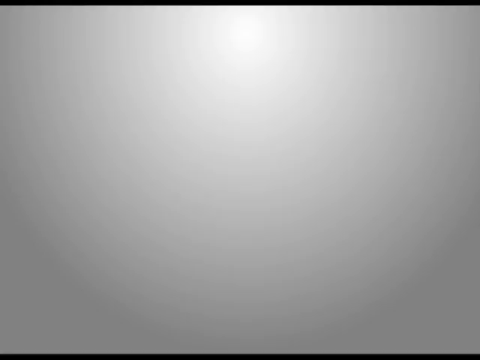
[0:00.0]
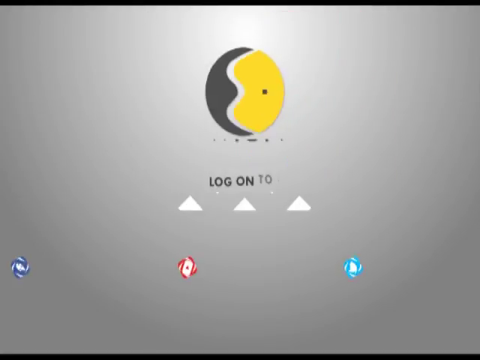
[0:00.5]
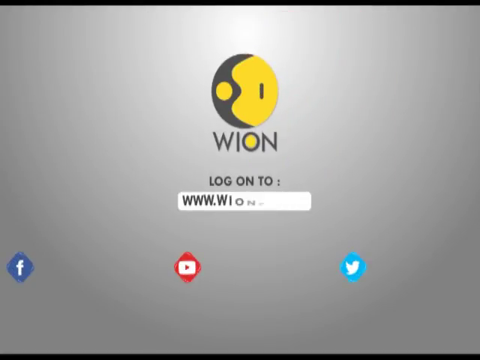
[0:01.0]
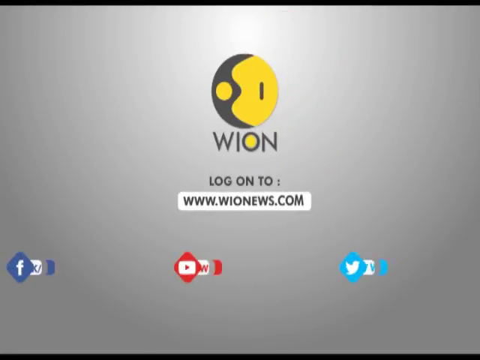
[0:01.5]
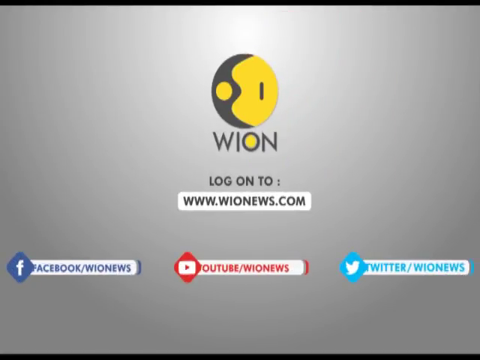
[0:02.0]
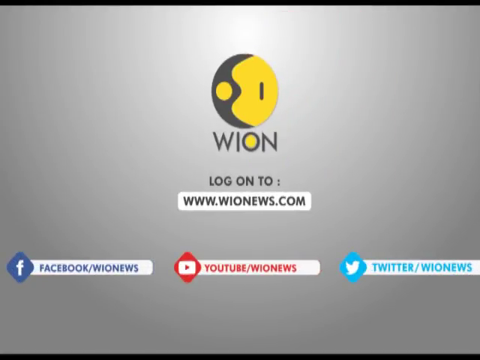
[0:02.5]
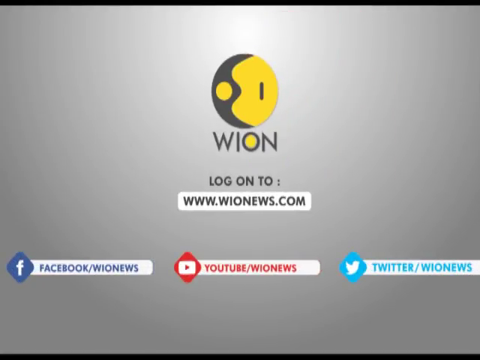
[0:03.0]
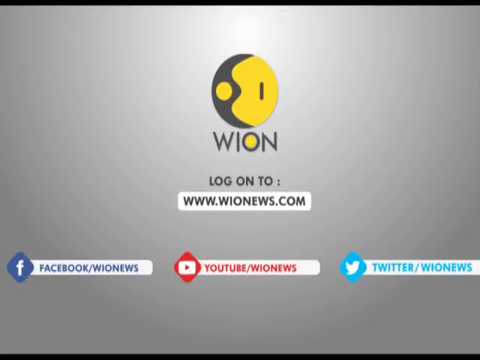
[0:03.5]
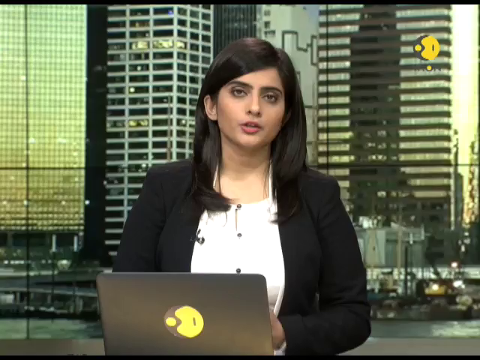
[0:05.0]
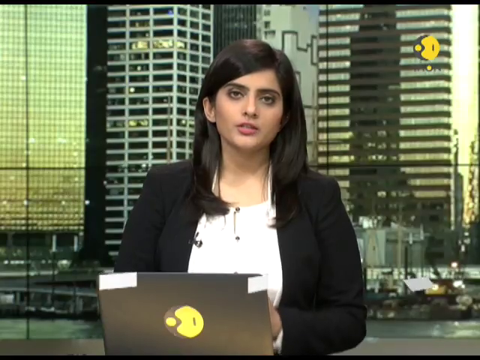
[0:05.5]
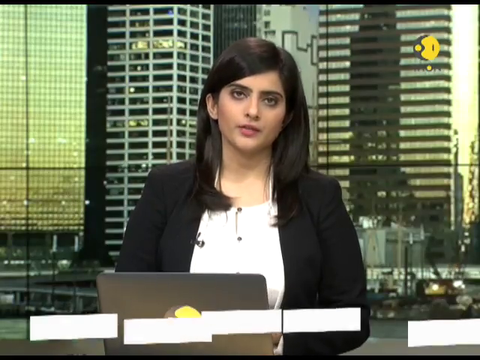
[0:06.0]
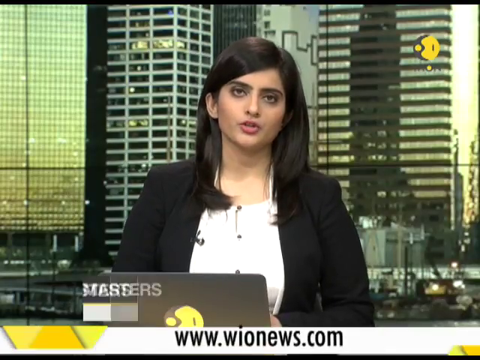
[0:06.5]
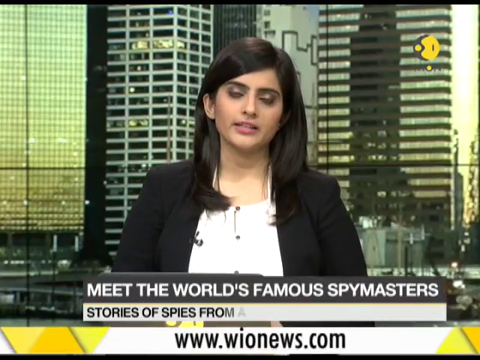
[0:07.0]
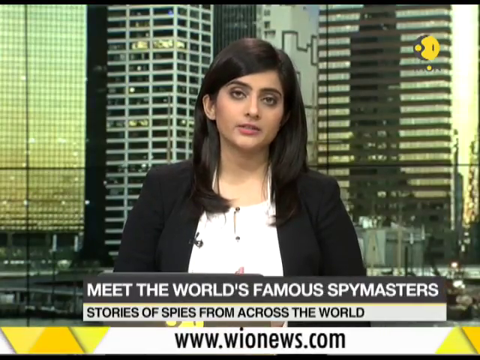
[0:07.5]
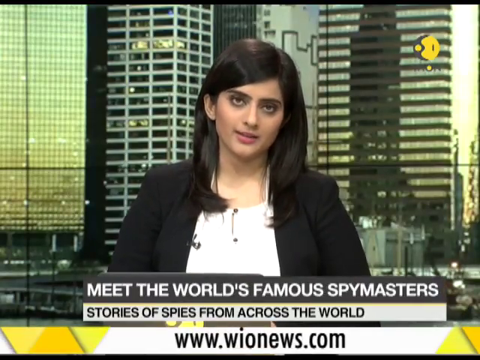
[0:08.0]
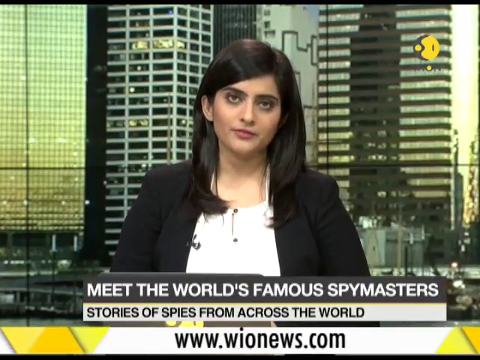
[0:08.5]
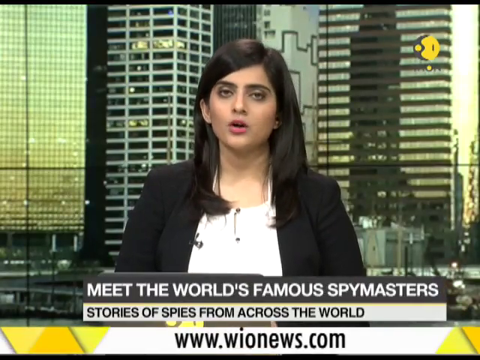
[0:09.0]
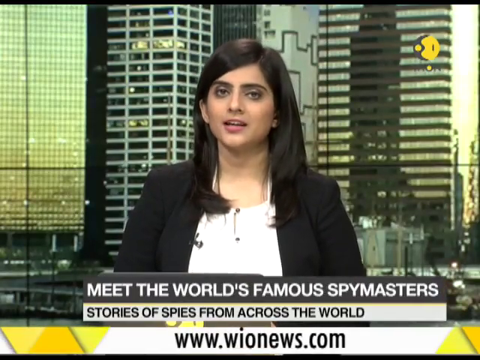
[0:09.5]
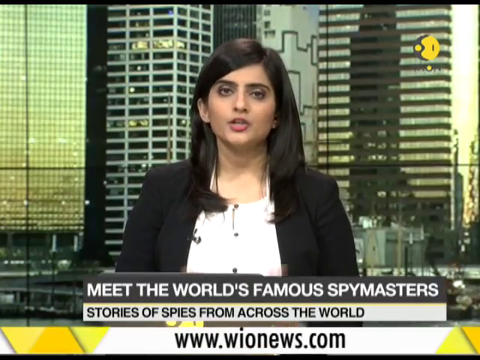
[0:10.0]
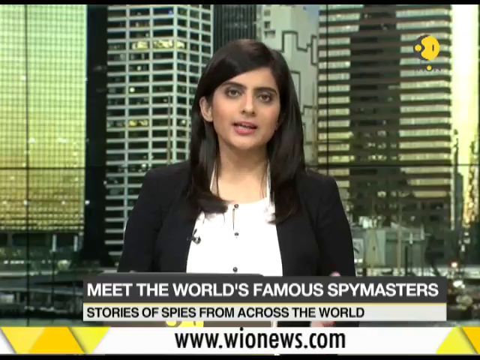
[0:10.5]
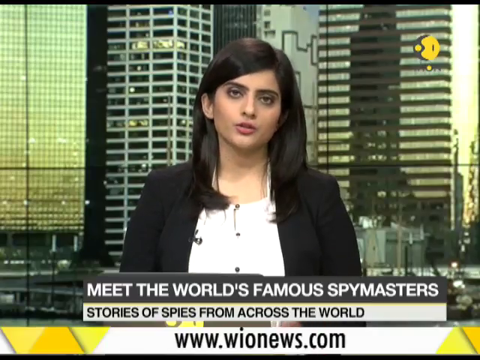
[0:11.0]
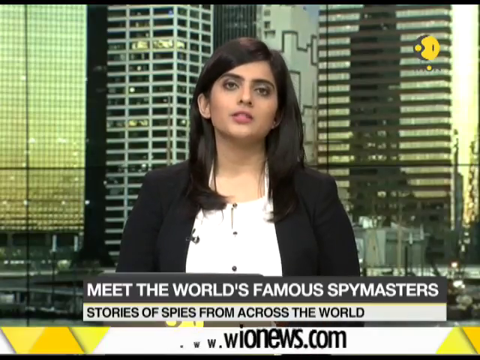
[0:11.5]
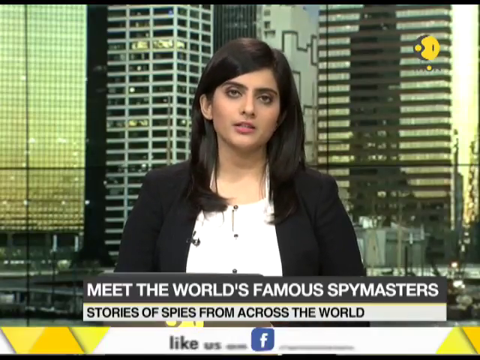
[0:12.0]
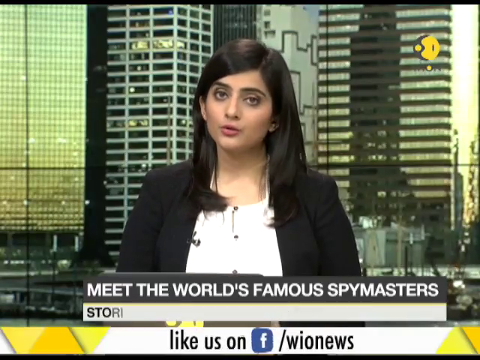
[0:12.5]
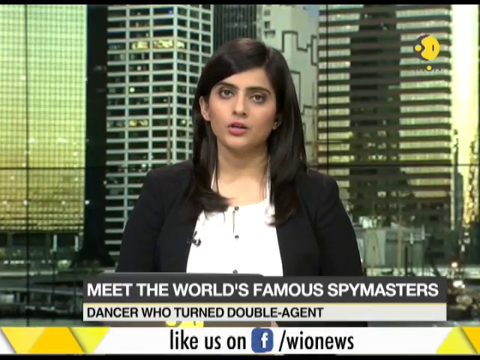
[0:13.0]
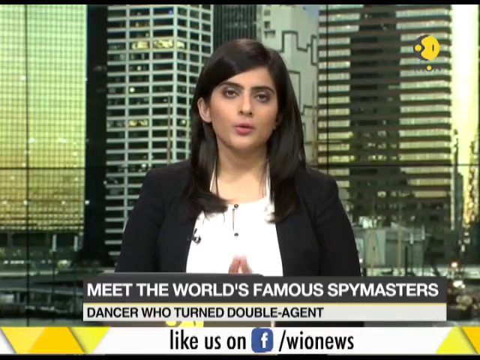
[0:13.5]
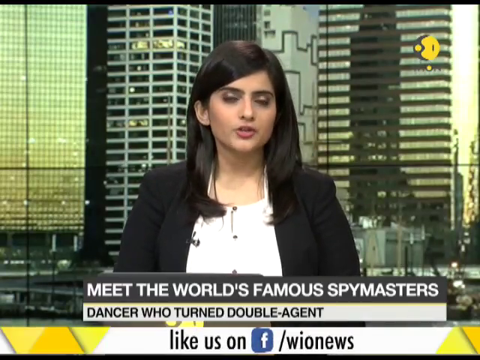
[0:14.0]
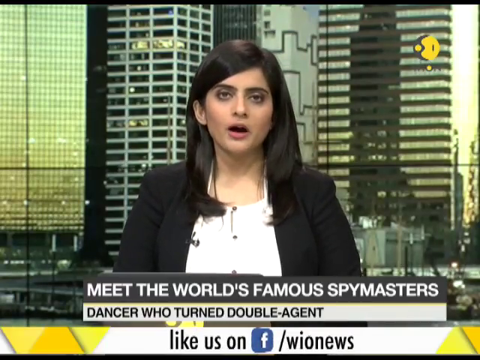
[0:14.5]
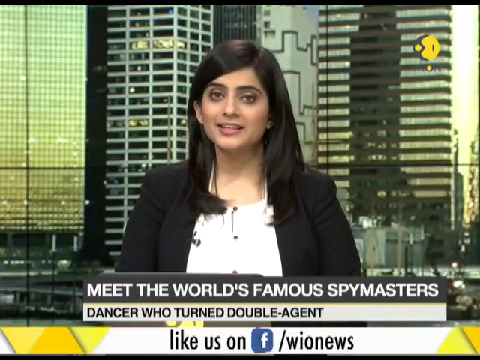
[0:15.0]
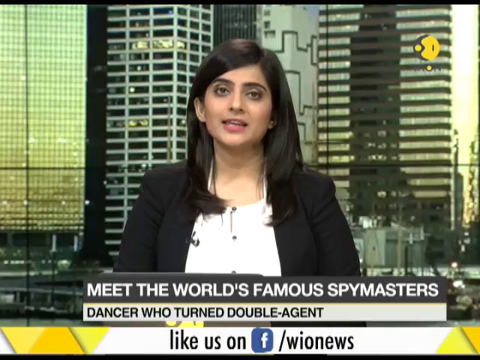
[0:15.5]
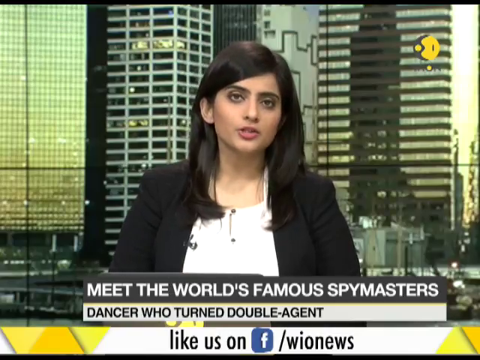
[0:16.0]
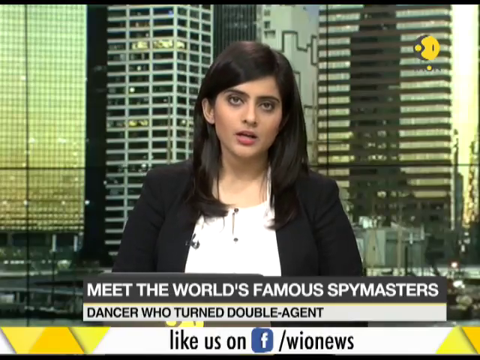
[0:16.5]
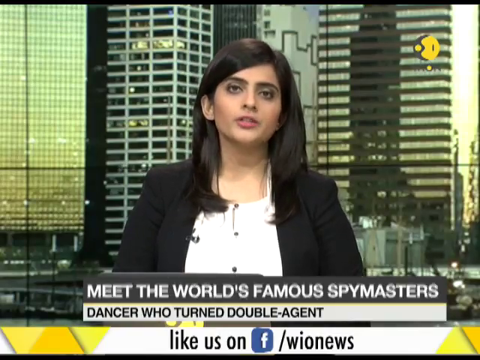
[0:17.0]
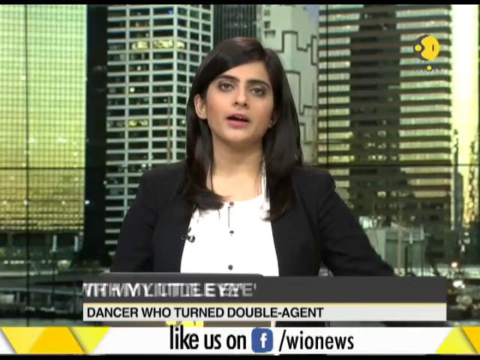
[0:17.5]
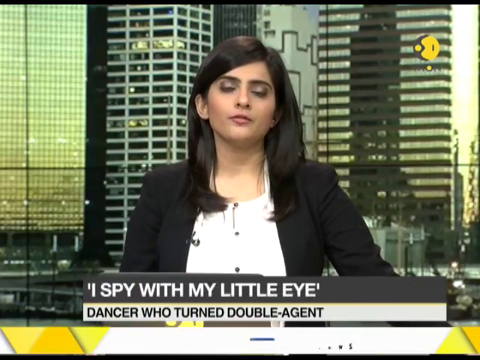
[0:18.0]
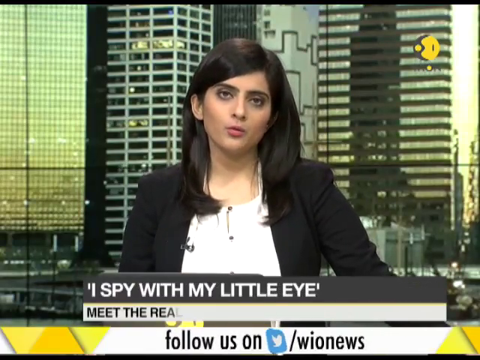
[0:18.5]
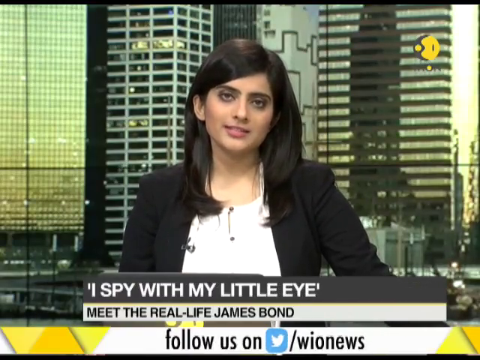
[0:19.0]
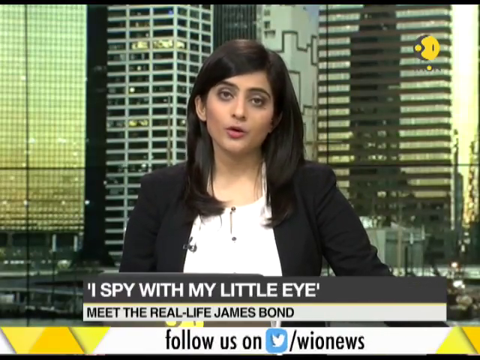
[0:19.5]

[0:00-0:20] The video opens on an all-gray background, and a yellow and black icon pops up with the text "Wion." Below it is the text "log on to www.wionnews.com," and some social media handles pop up at the bottom of the screen. The screen then changes to a woman with longer brown hair wearing a black suit jacket and a white shirt. She sits in front of an open laptop and talks into the video, with a large city background behind her. At the bottom of the screen the text reads "Meet the world's famous spy masters," with "Stories of spies from across the world" below it. The bottom changes to "Dancer who turned double agent," and then to "I spy with my little eye" with "Meet the real-life James Bond" below it.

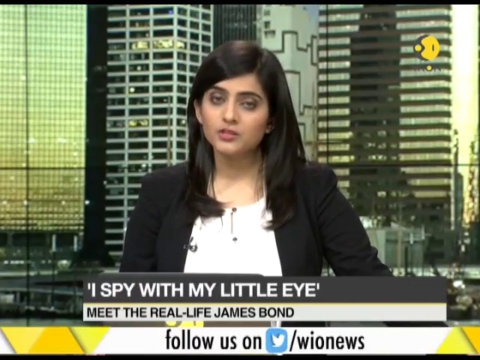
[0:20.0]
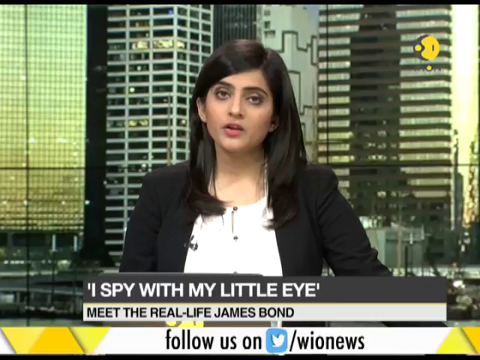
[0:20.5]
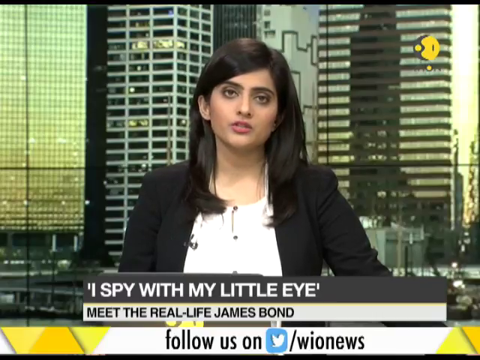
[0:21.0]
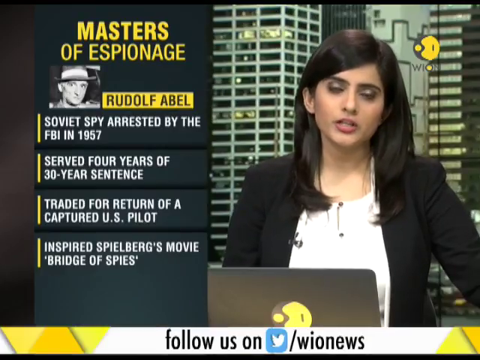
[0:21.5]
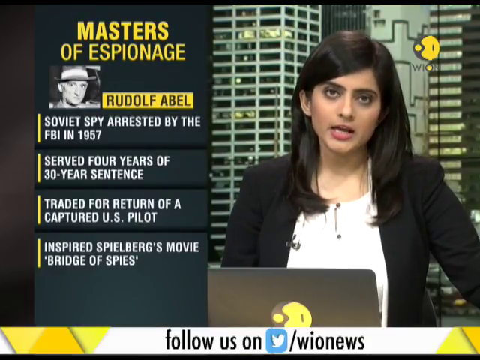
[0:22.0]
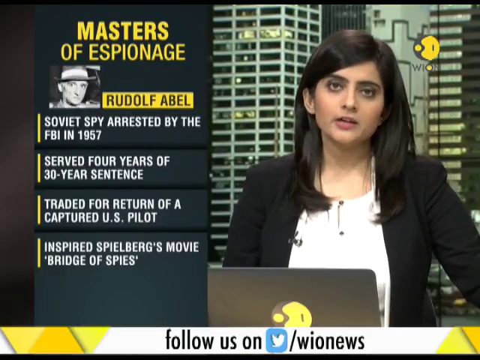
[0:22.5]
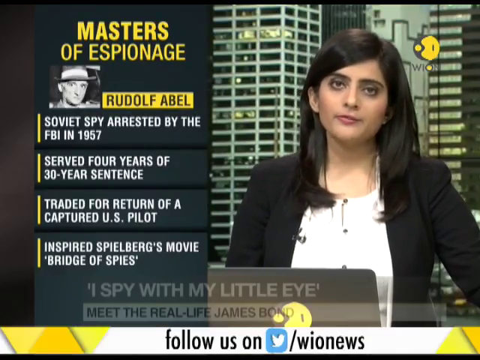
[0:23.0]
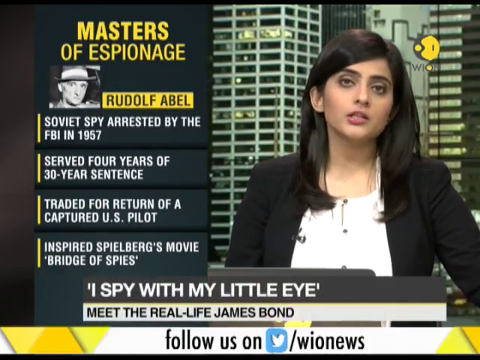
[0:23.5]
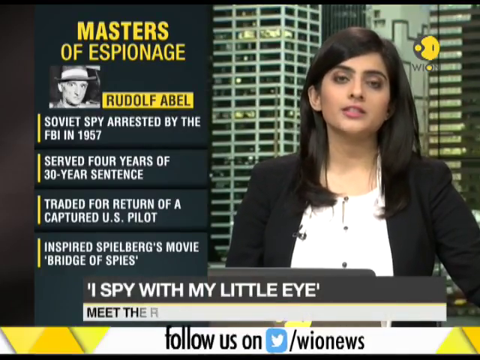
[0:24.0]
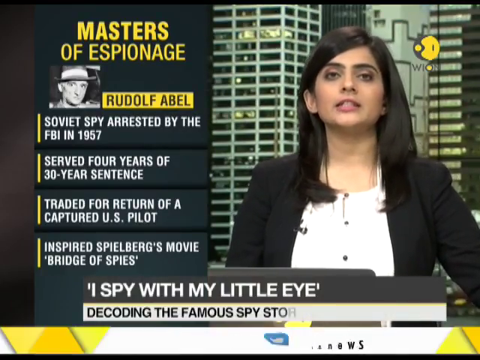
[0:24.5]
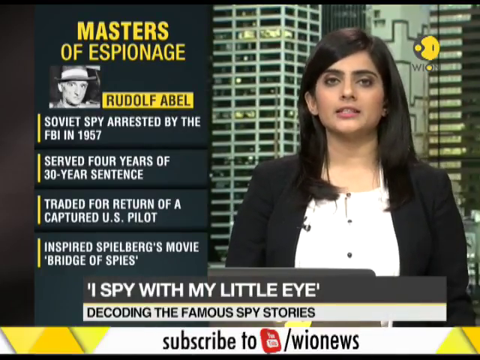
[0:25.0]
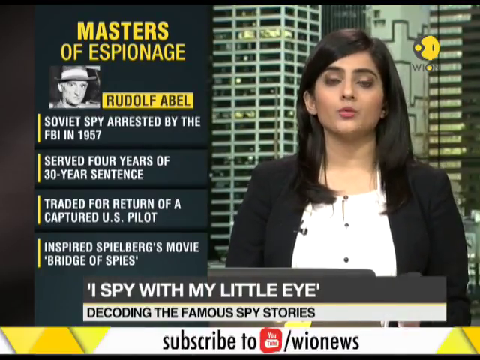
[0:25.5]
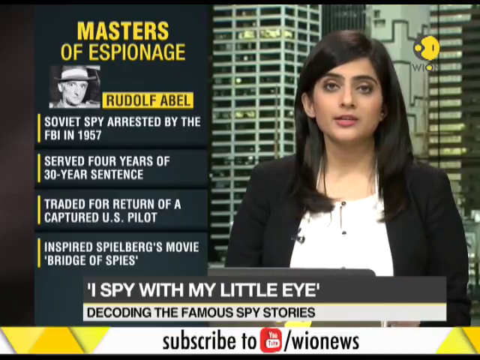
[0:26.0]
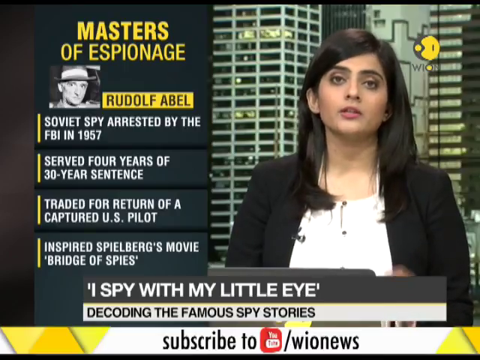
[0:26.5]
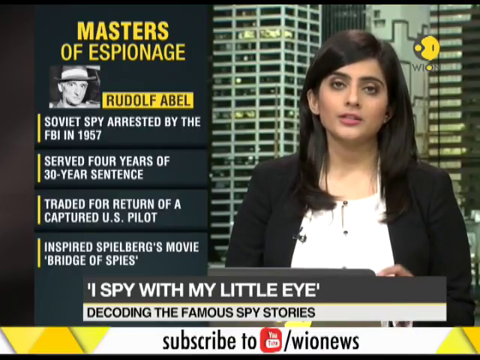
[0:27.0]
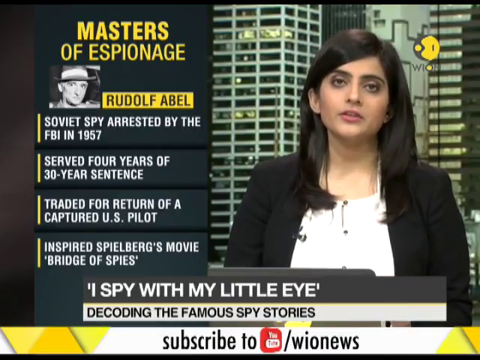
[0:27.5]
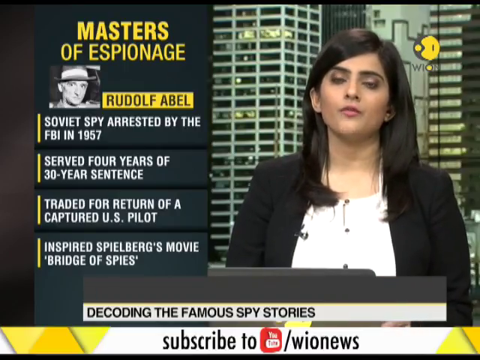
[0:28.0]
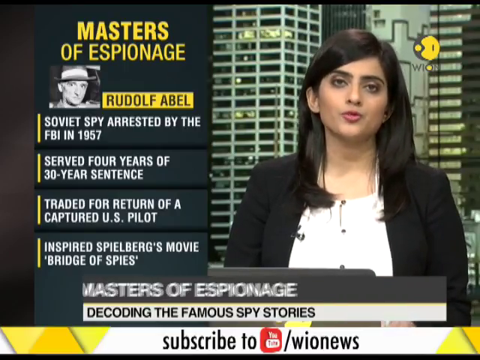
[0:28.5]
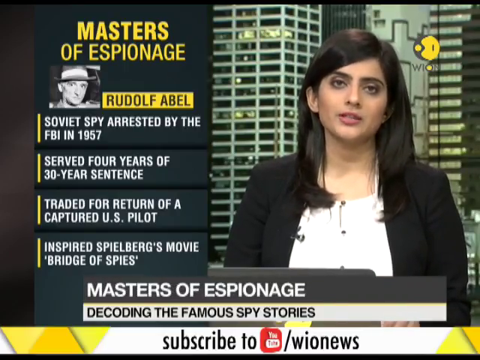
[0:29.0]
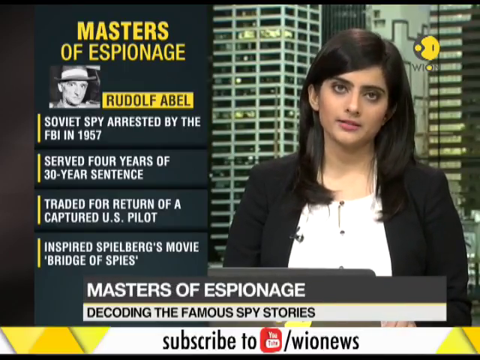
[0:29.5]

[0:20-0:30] A woman with dark hair in a dark jacket sits in front of a city scene. Labels below her include "Meet the real life James Bond." A bar opens up beside her reading "masters of espionage," with a picture of a man, his name, and several facts listed below the name. The white label at the bottom of the screen then changes to "Decoding the famous spy stories."